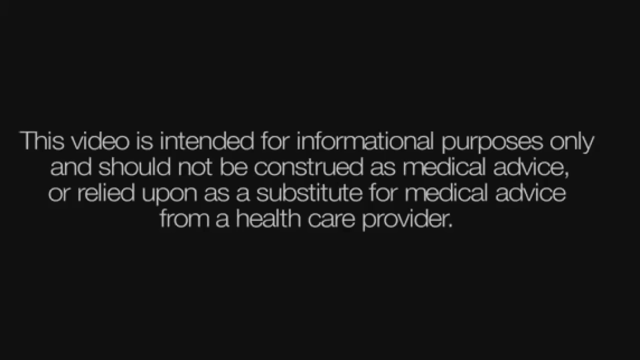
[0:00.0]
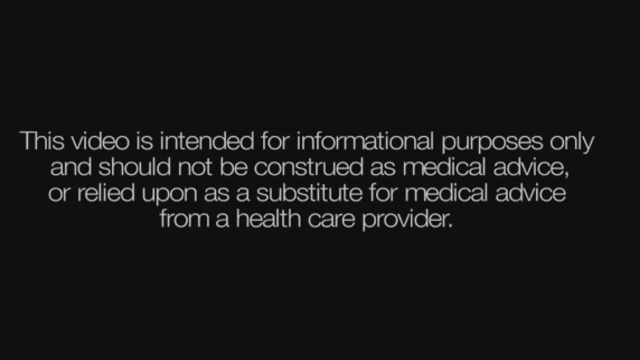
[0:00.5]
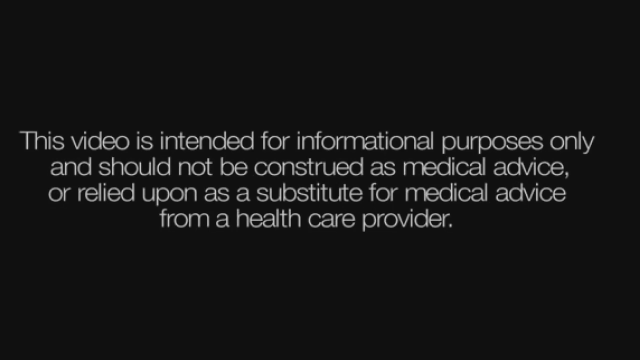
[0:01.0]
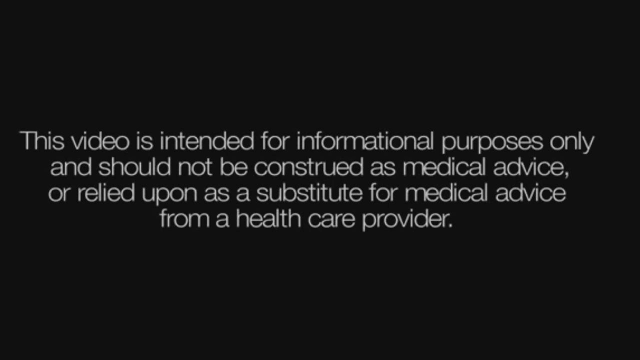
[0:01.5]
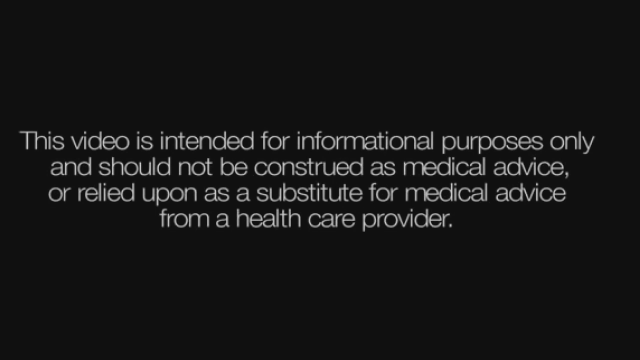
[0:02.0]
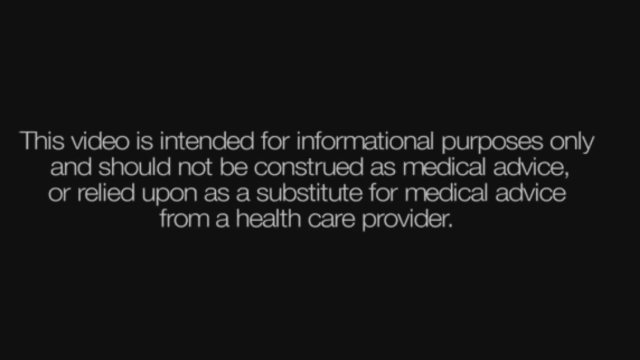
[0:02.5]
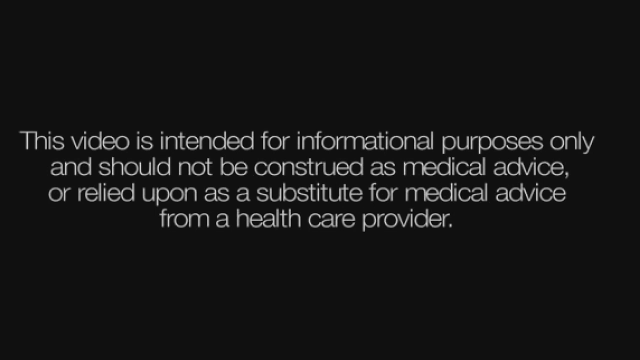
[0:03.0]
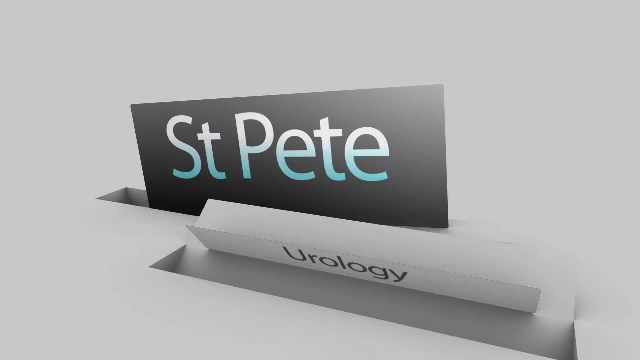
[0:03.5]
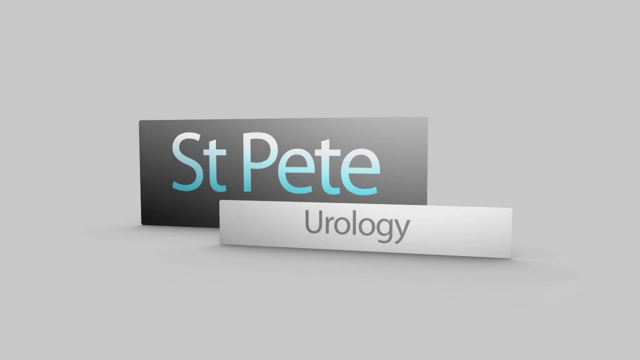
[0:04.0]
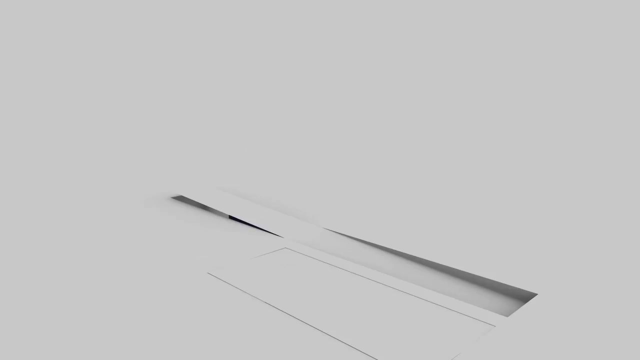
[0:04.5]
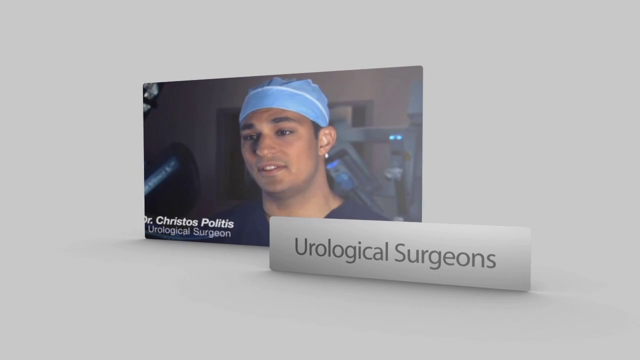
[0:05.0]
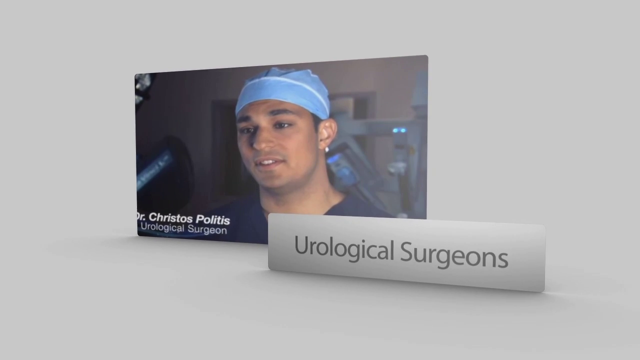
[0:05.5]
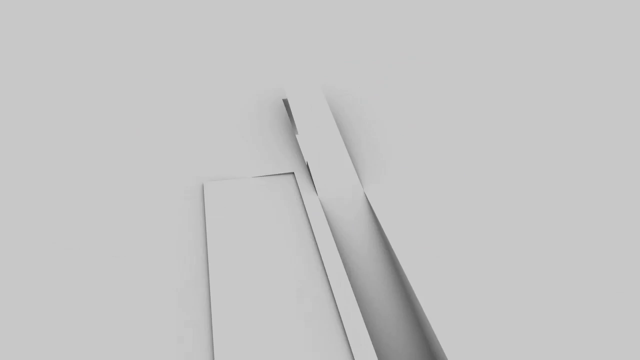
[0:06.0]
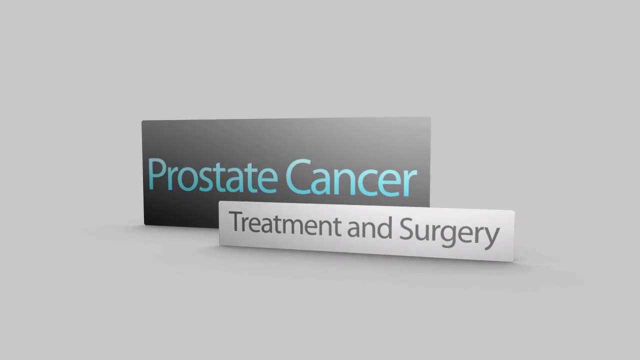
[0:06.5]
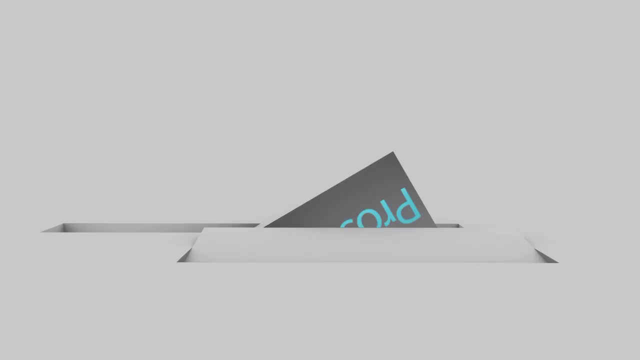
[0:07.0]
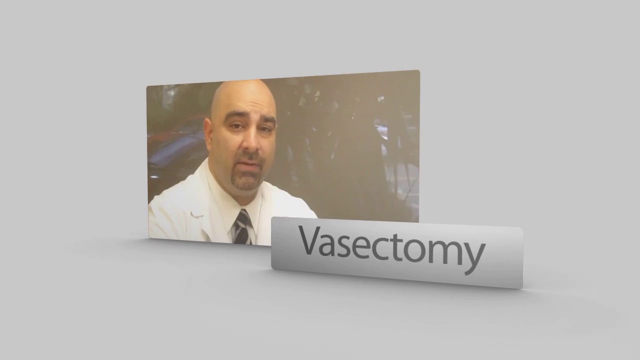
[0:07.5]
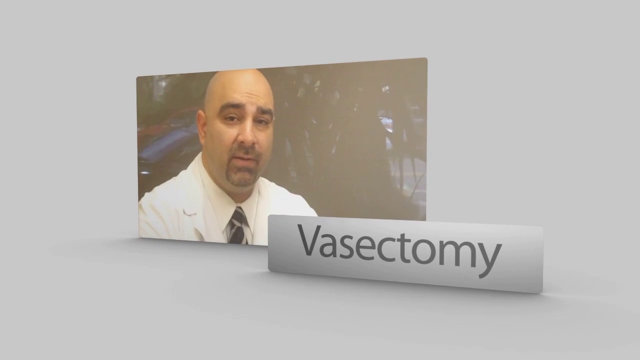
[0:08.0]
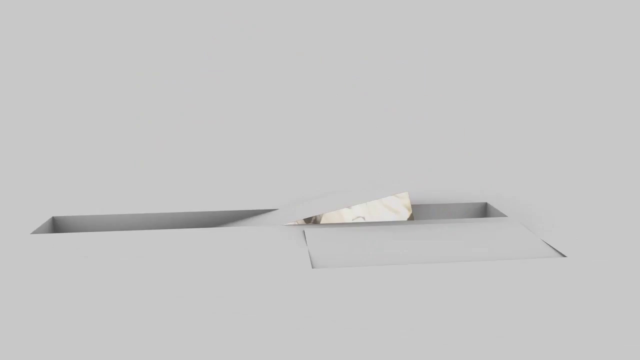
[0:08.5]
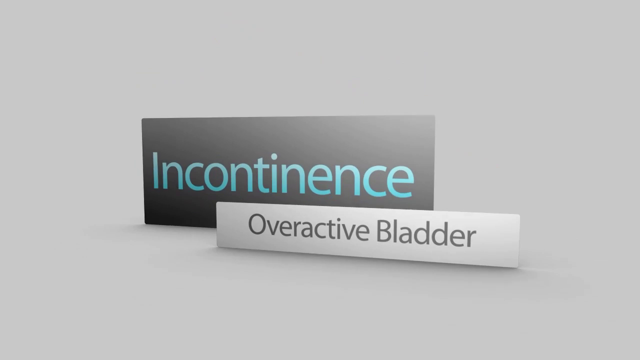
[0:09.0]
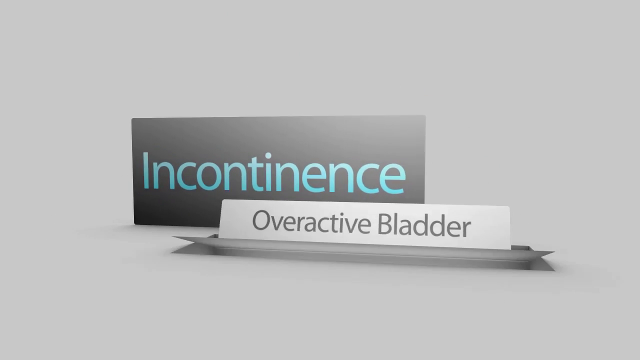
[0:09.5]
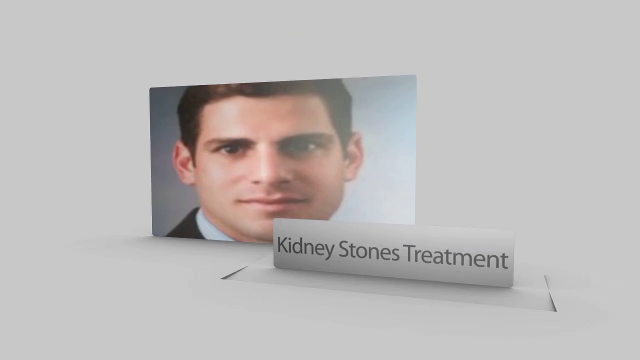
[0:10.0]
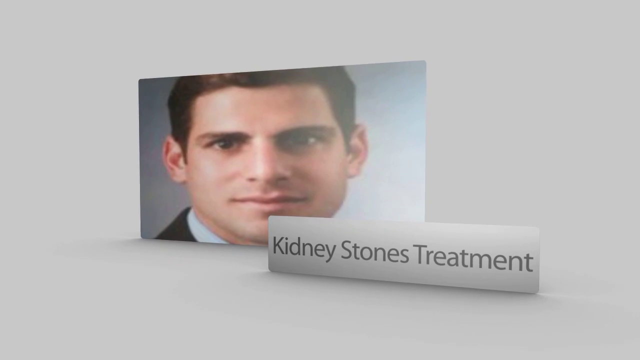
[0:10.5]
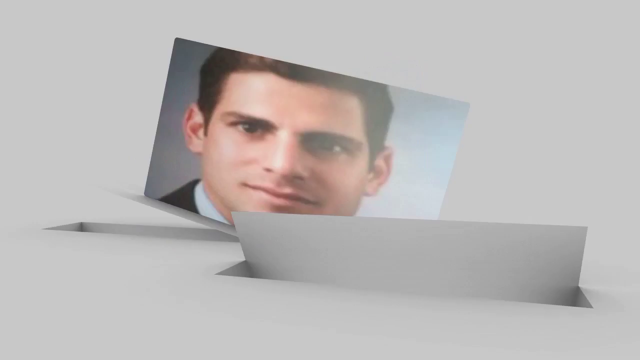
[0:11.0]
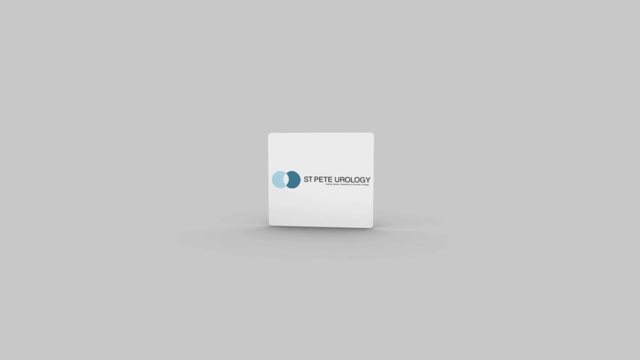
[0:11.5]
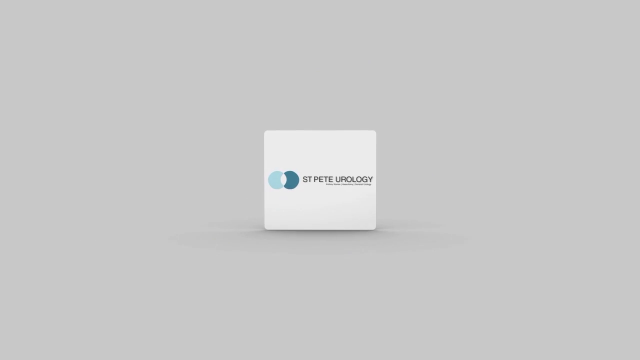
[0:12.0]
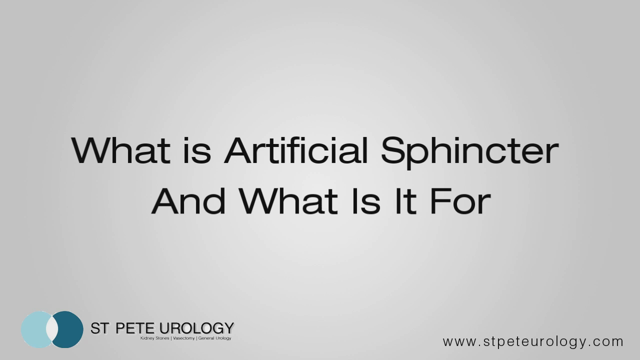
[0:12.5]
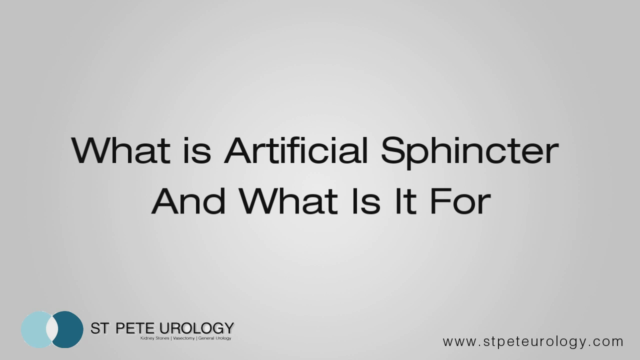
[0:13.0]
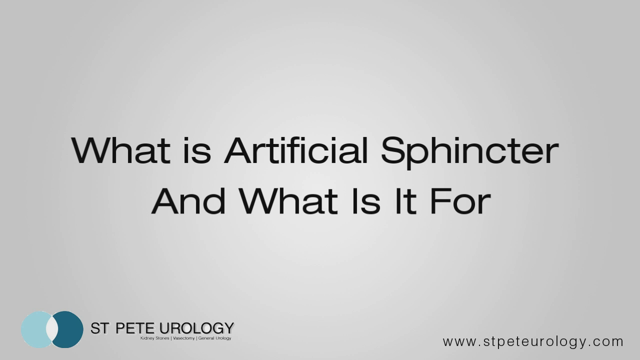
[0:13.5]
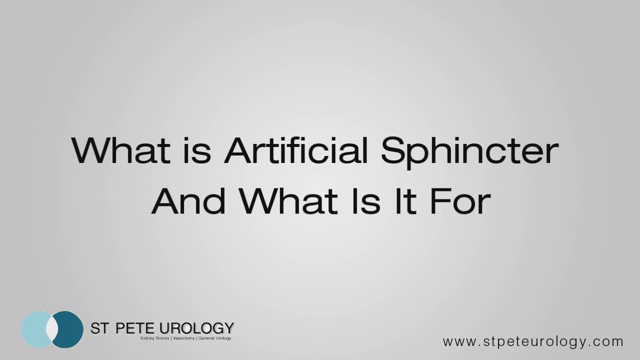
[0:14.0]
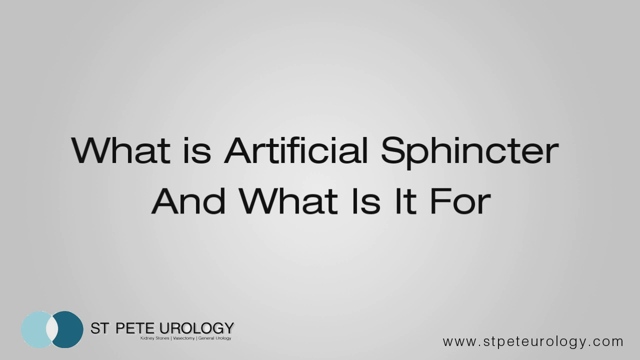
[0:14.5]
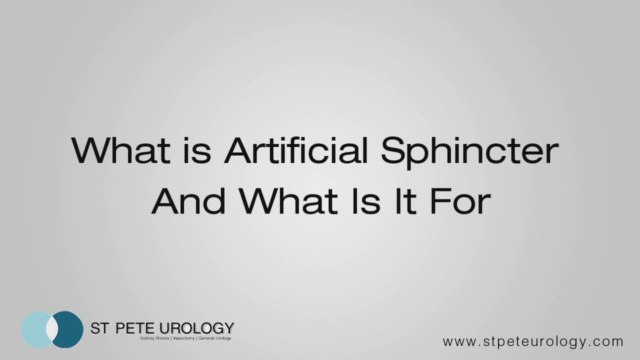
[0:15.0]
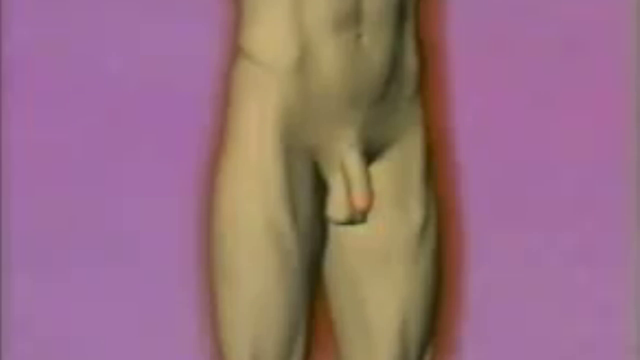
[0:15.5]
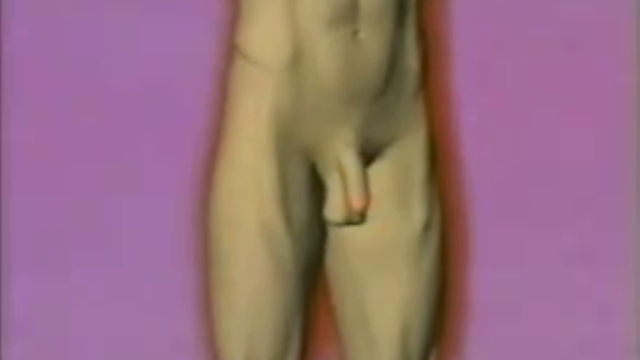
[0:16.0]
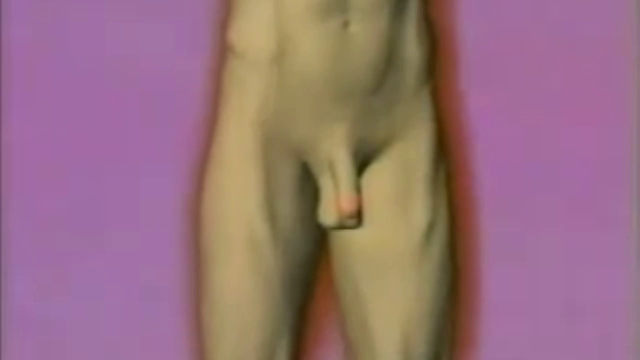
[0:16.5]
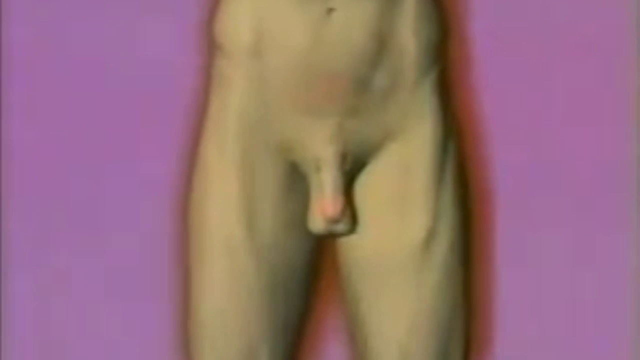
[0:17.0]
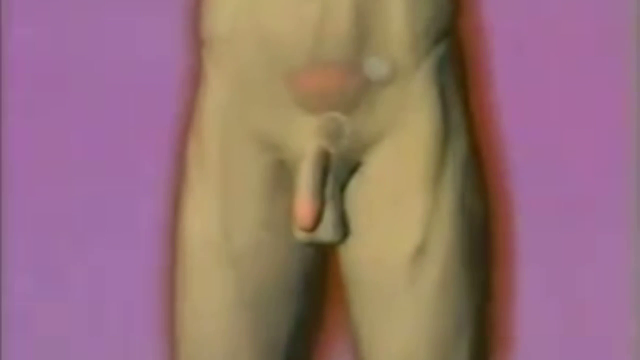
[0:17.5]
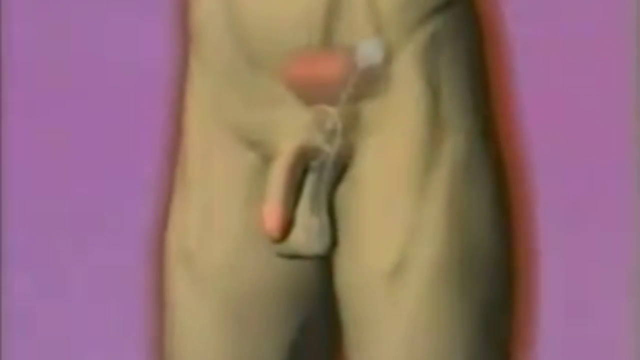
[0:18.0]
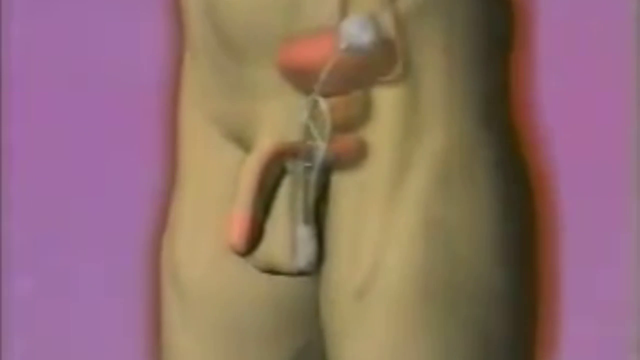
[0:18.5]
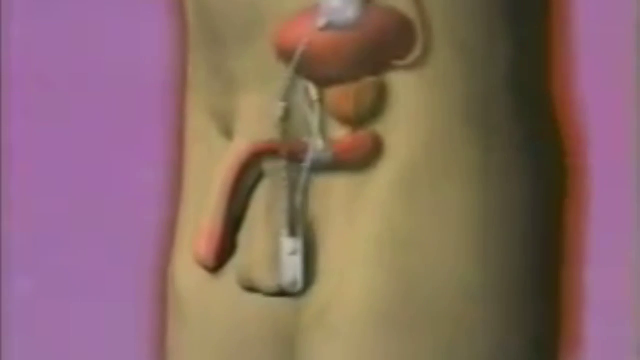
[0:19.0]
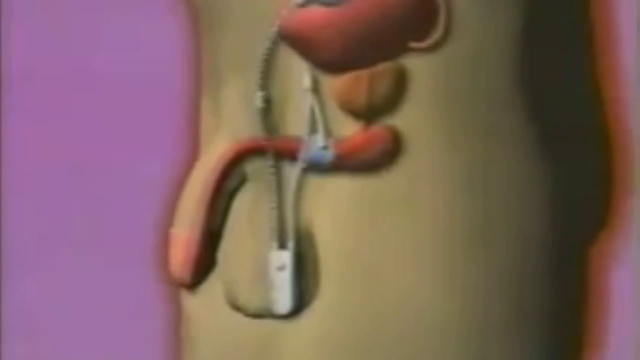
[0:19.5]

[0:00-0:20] The video opens on a background screen with white words in the middle that read: "The video is intended for informational purposes only and should not be construed as medical advice or relied upon as a substitute for medical advice from a healthcare provider." An animation follows with a light gray background and the words "St. Pete Urology" in the middle of the screen. Next comes a picture of a man wearing scrubs and a light blue head cap; in the lower left corner it says "Dr. Christos Politis Urological Surgeon," and on the right side it says "Urological Surgeons." More words then appear in the middle of the screen: "Prostate Cancer Treatment and Surgery, Vasectomy, Incontinence, Overactive Bladder, Kidney Stones Treatment, St. Pete Urology. What is artificial sphincter and what is it for?" The video then shows an animation of the male anatomy from the waist down.